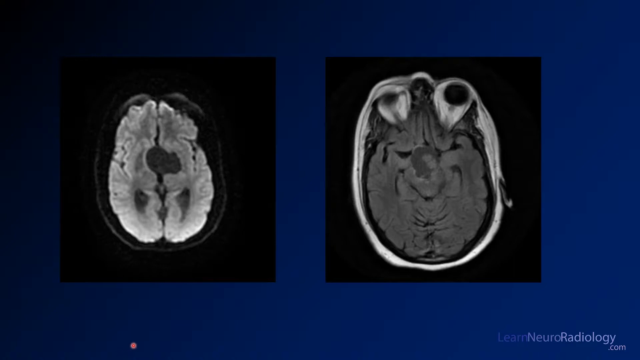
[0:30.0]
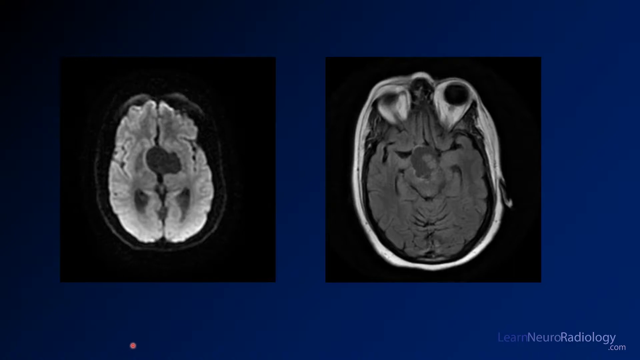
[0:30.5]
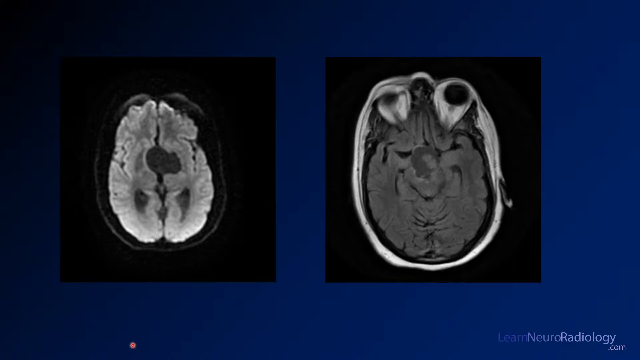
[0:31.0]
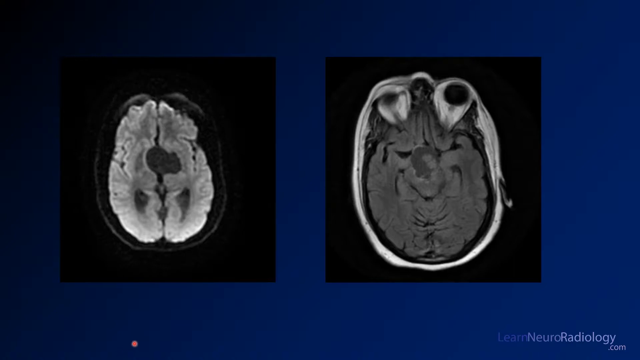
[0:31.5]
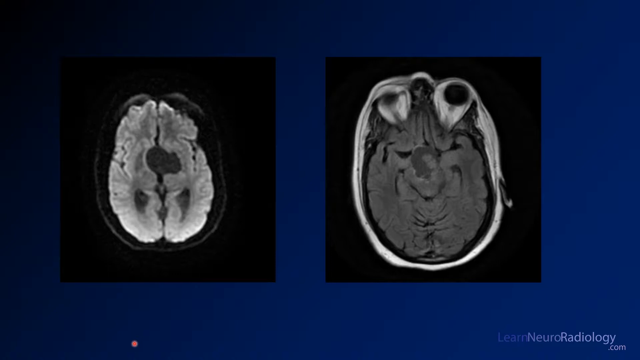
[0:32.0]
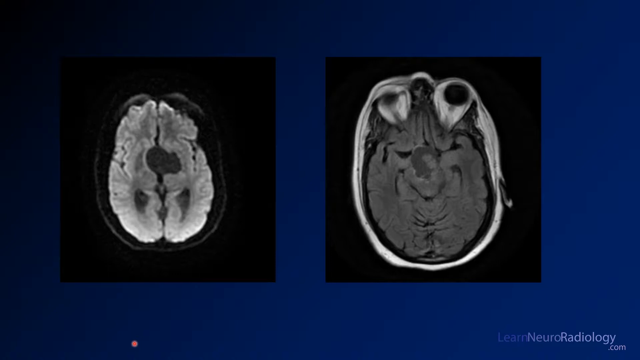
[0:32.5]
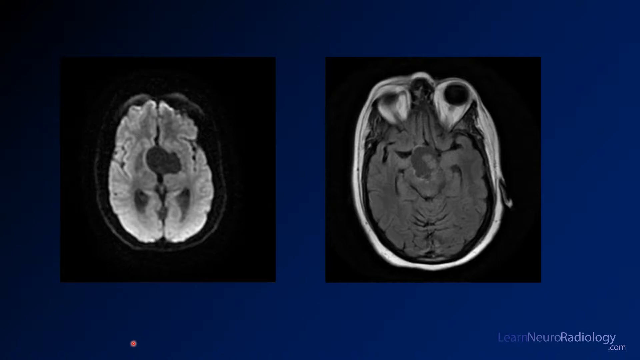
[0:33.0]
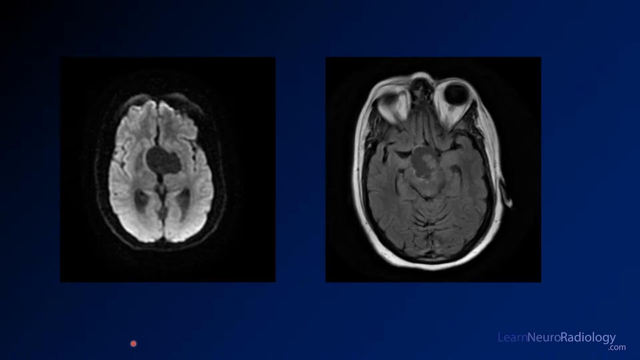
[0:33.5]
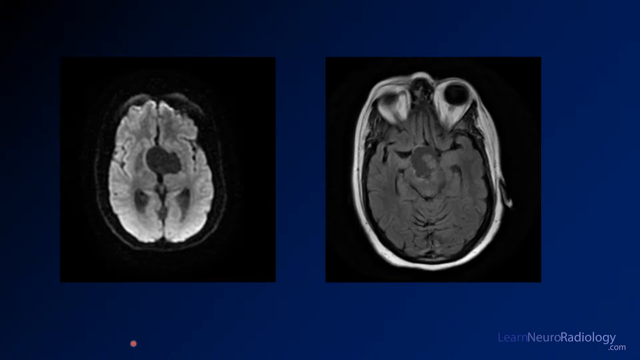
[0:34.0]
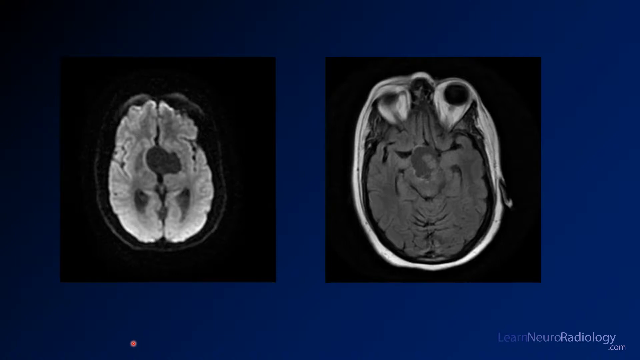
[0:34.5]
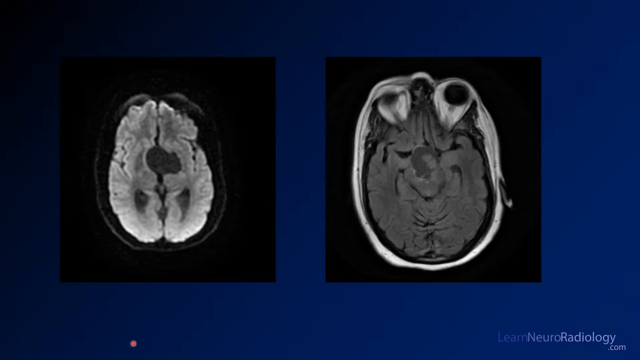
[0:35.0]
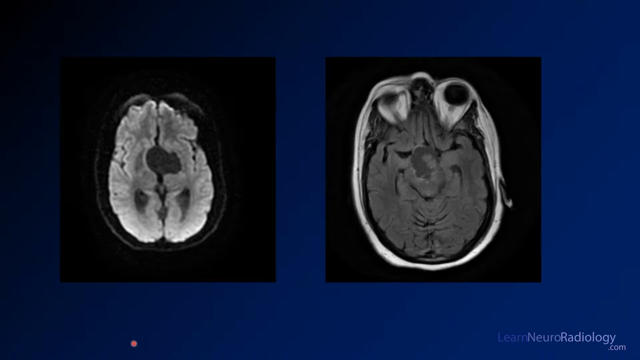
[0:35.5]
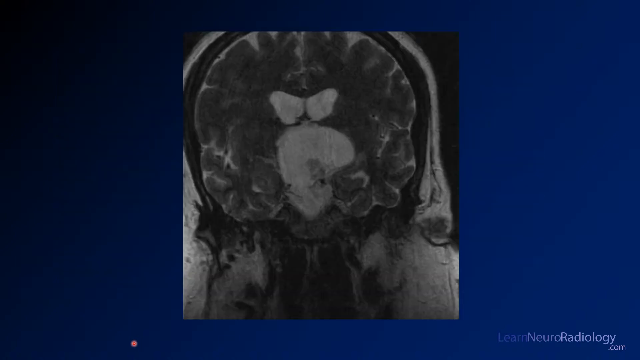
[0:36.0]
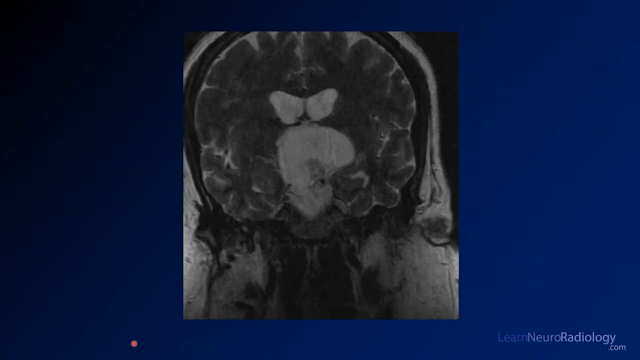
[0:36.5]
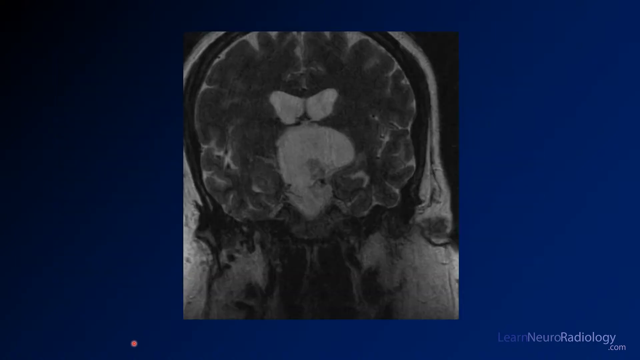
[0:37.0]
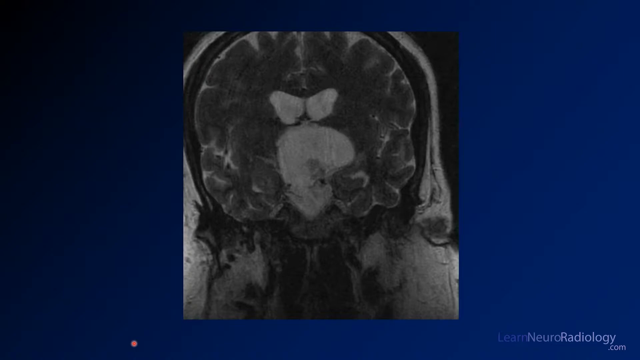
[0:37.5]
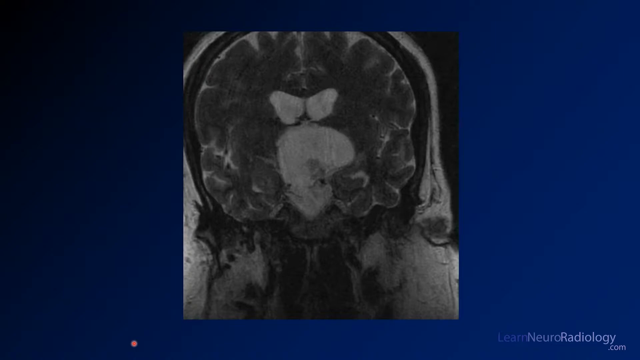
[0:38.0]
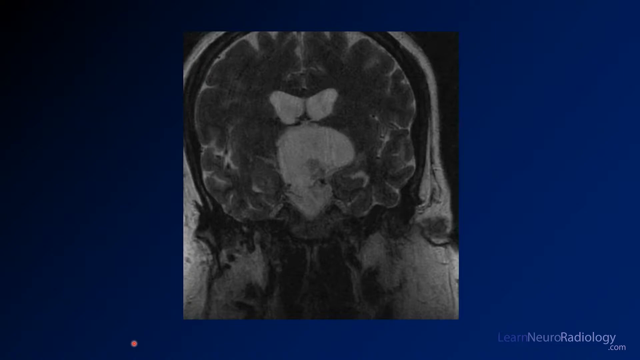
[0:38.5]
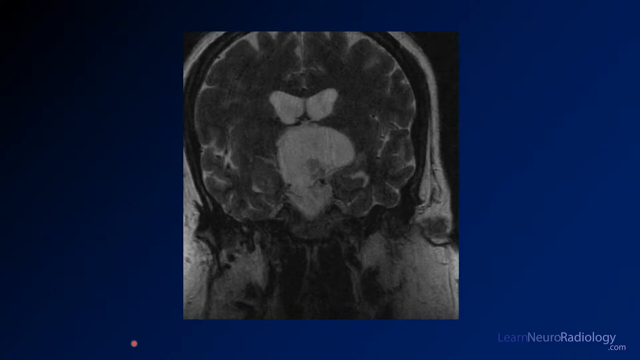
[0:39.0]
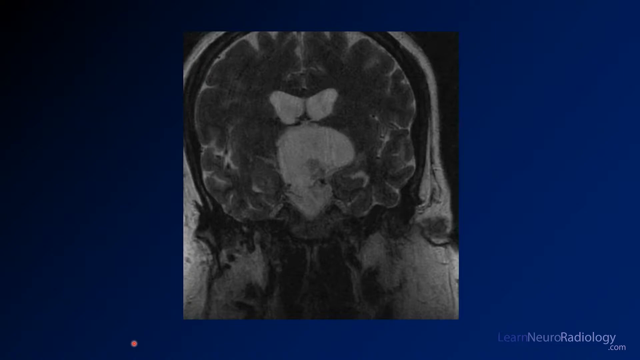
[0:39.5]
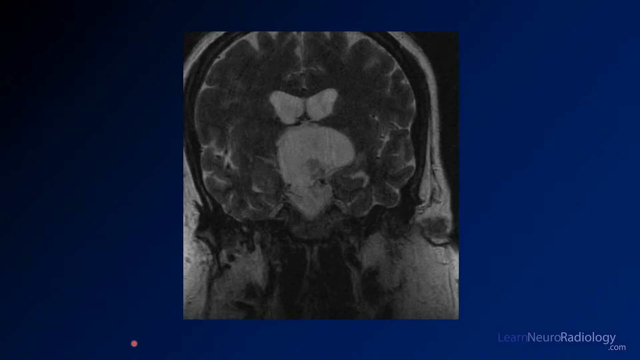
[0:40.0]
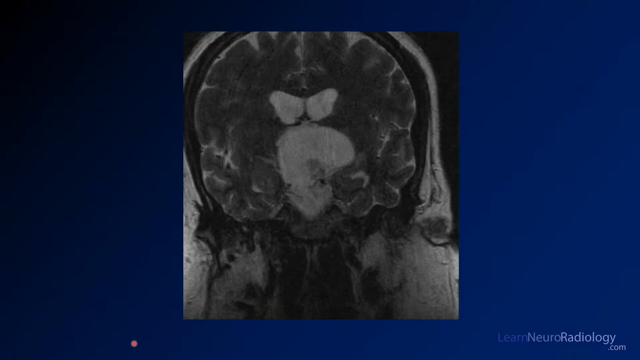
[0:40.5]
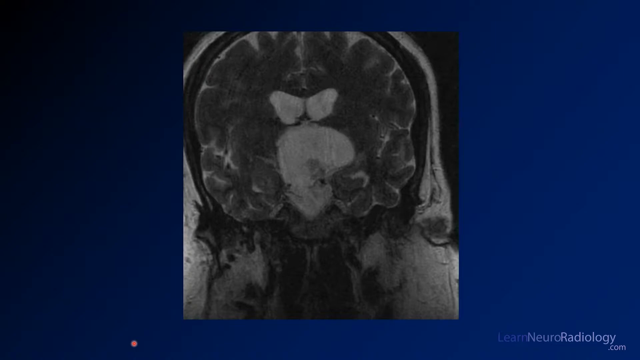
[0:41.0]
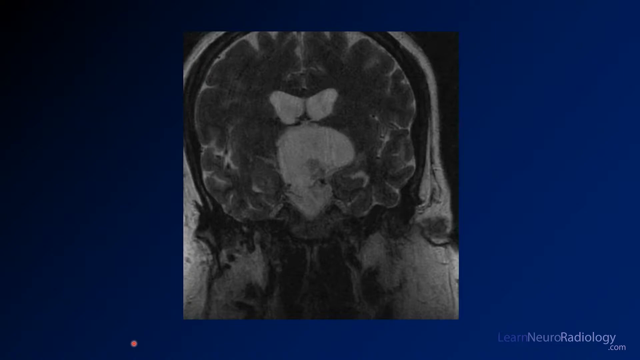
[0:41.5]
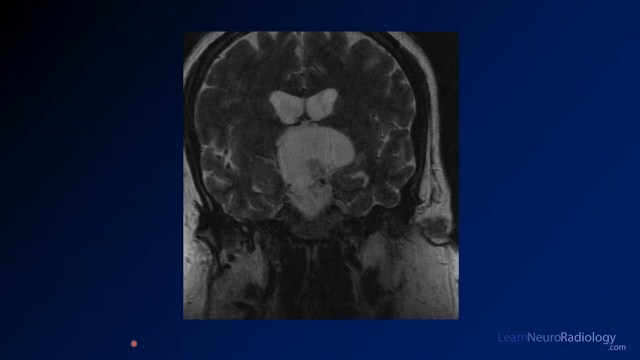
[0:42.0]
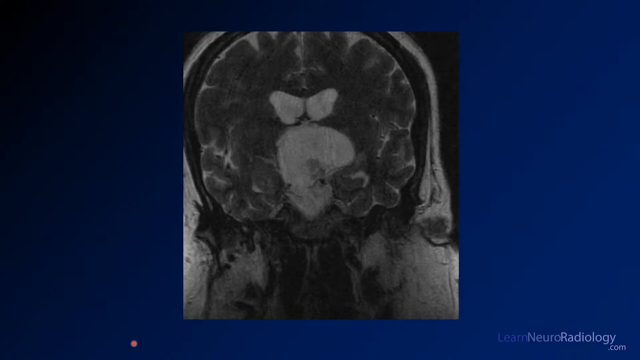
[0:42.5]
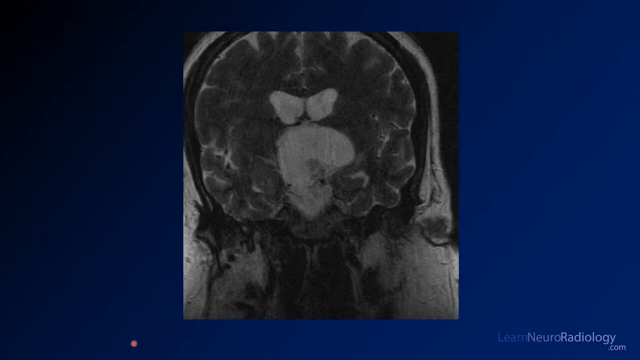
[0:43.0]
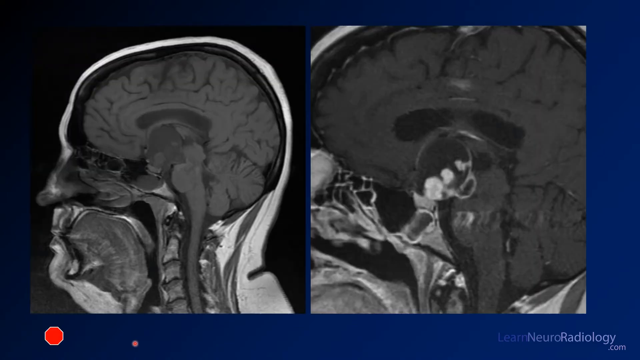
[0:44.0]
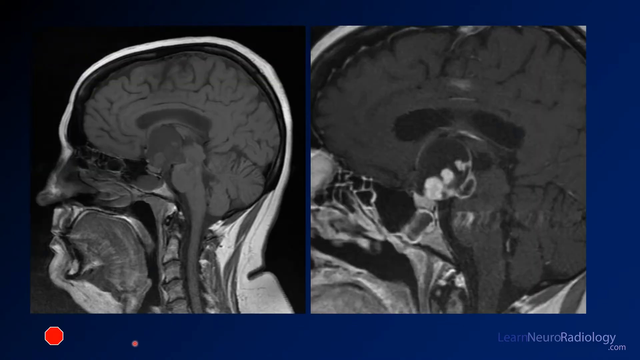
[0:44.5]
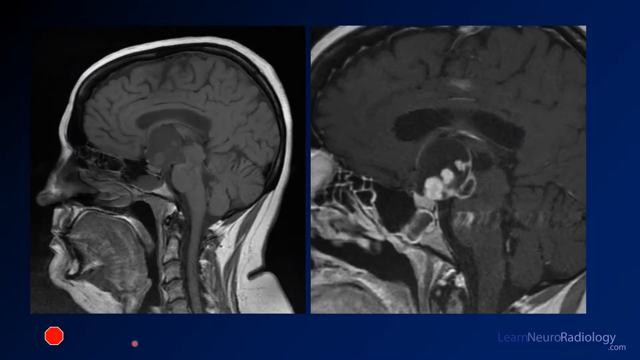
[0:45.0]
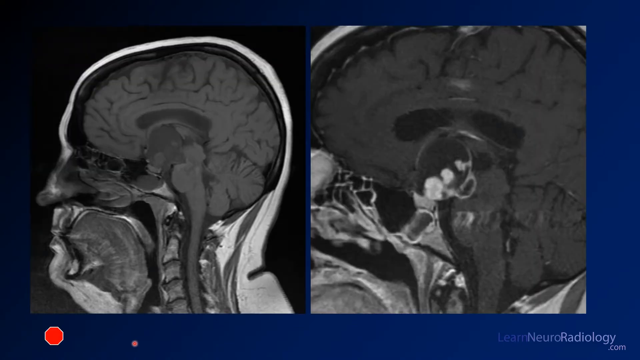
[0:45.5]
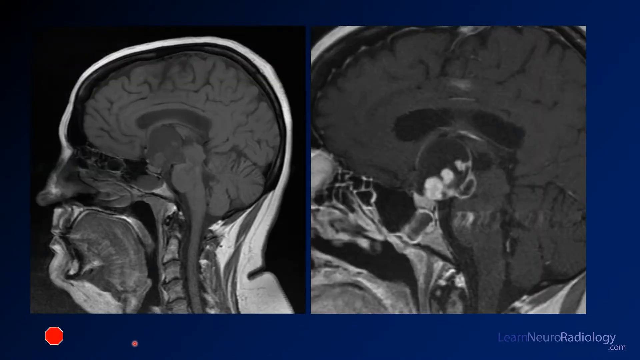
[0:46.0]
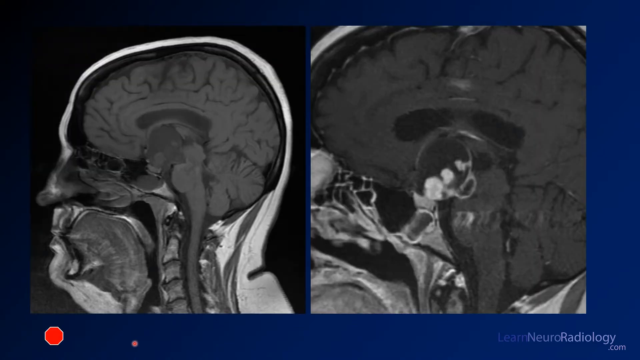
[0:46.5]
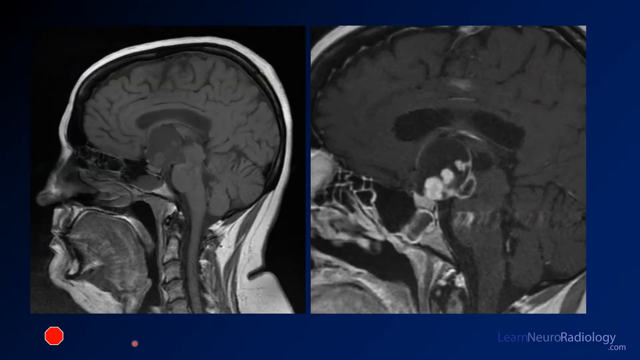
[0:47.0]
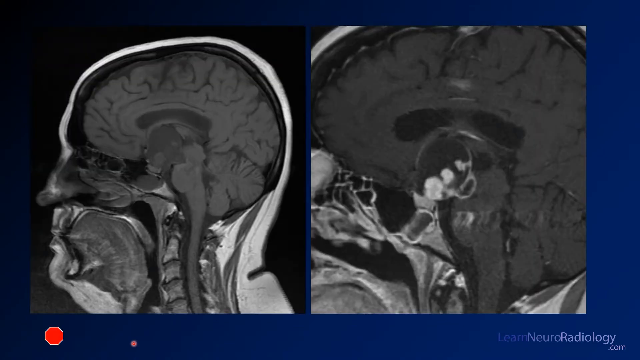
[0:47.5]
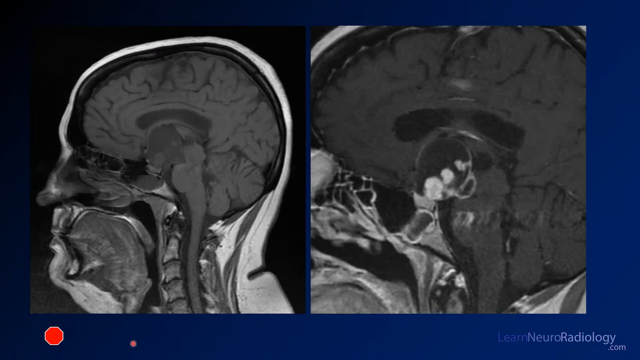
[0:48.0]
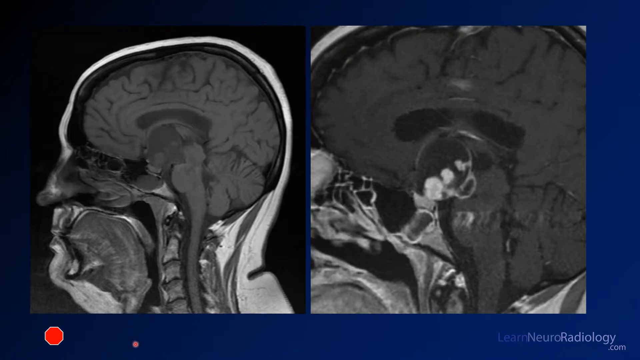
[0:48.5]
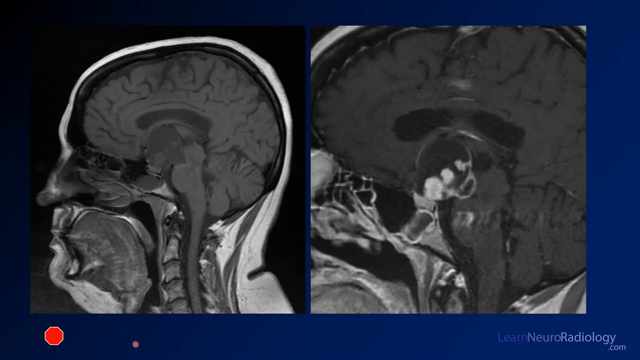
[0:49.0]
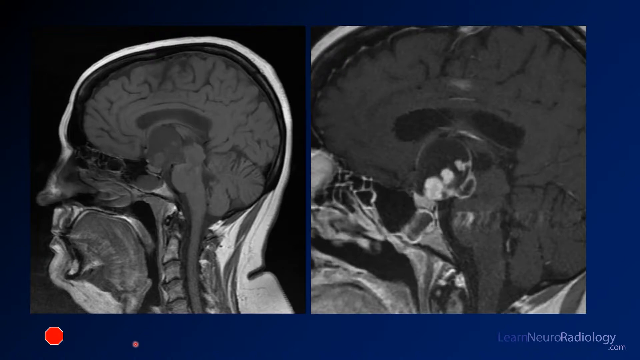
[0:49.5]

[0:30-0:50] On the blue background, two scan images appear side by side. They are hospital MRI or CT type scans of what is apparently the brain. The left image clearly shows two halves of the brain, with a dark, roughly circular shape in the middle. The right image shows a little more of the outside ring, which is quite white compared with the grey matter in the middle. A closer-up single image then appears in the middle of the screen, apparently of the brain, followed by two more MRI-like scans side by side. The left one shows the brain and the full head, and the right one is a closer, zoomed-in image of the left one that appears to highlight a section of white matter in the brain.